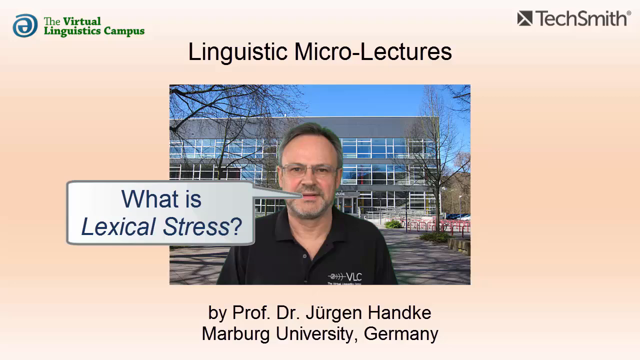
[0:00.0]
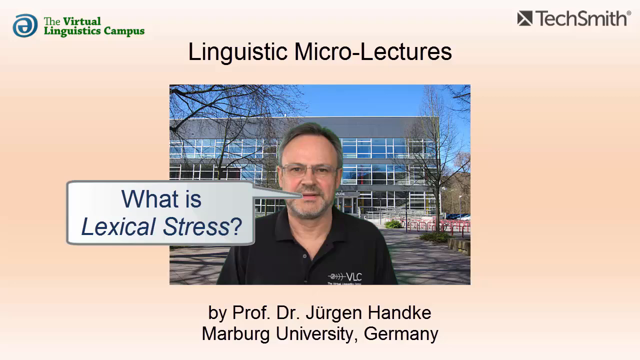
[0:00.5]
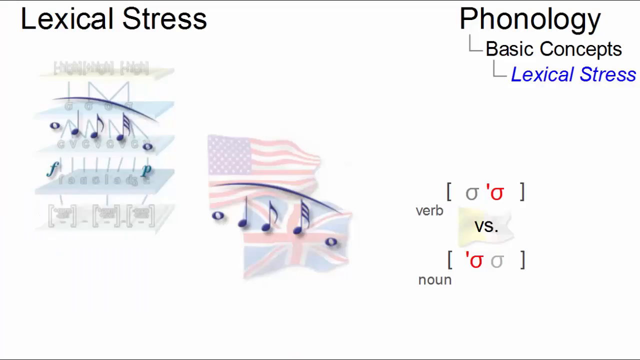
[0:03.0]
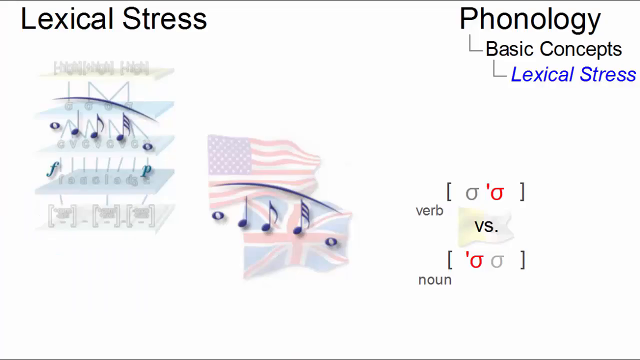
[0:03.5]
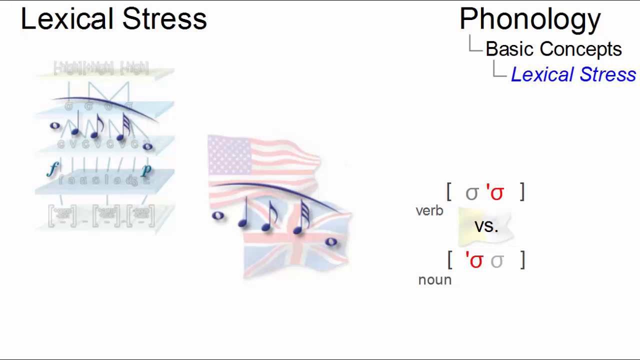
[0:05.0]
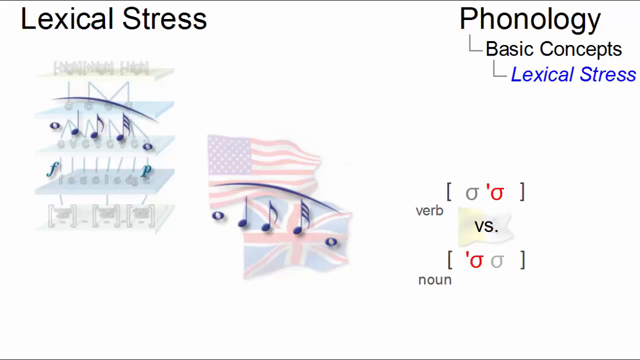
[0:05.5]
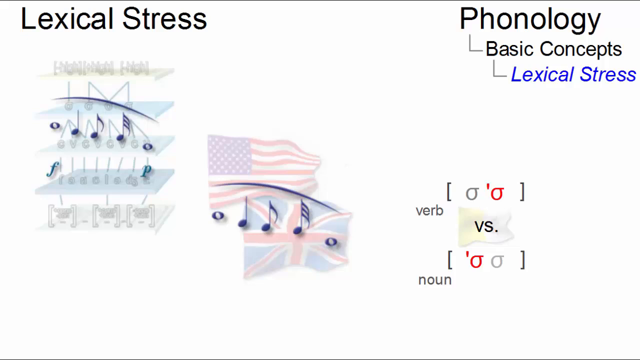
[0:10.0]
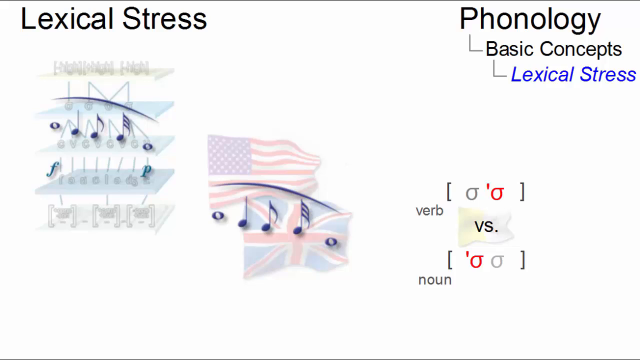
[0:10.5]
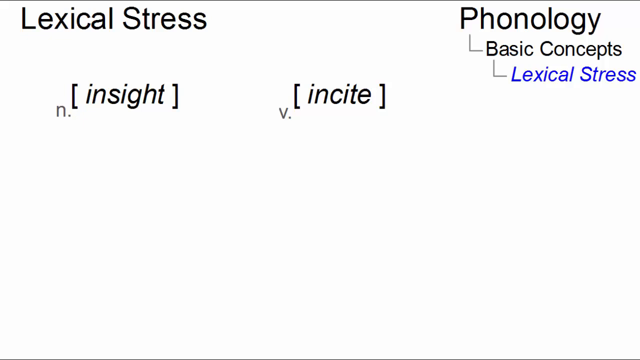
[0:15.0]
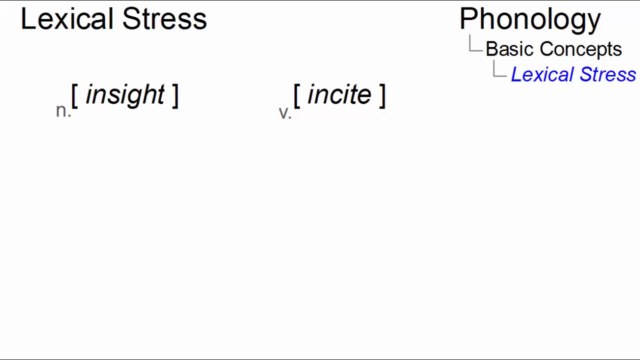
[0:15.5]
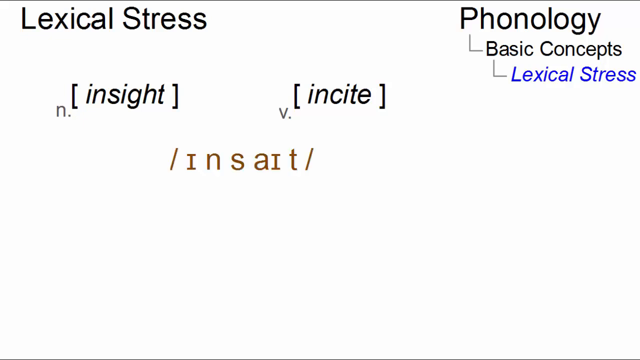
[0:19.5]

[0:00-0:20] The video is from the linguistic micro lectures. On the cover is a white man in front of a building that looks like a school or university building, seemingly some sort of institution. A speech bubble coming from his mouth says "what is lexical stress?" Some sort of musical notes appear, and the words "phonology, basic concepts, lexical stress" build onto the screen. Some sort of characters are written in red and blue; one says "red" and the other says "none." This appears to be a screen recording of a live stream. The American flag and UK flags are shown. Under "lexical stress" are the noun "inside" and the verb "inside," showing the difference between the two.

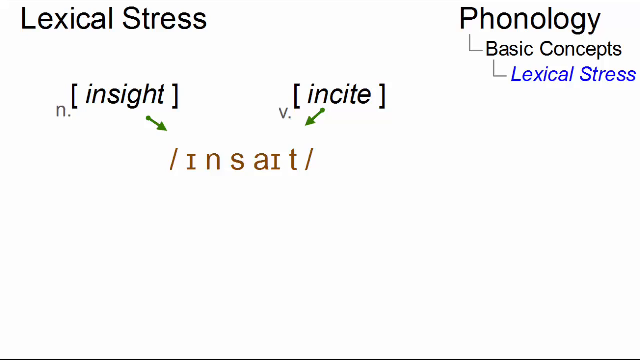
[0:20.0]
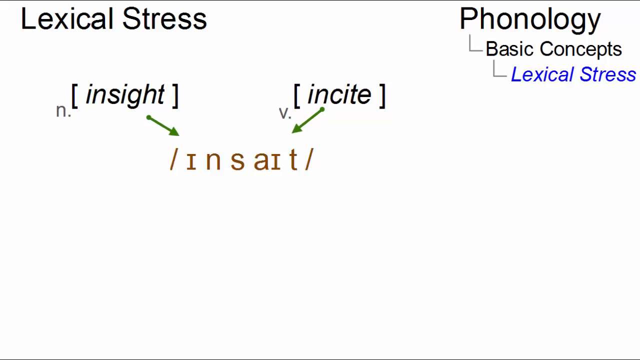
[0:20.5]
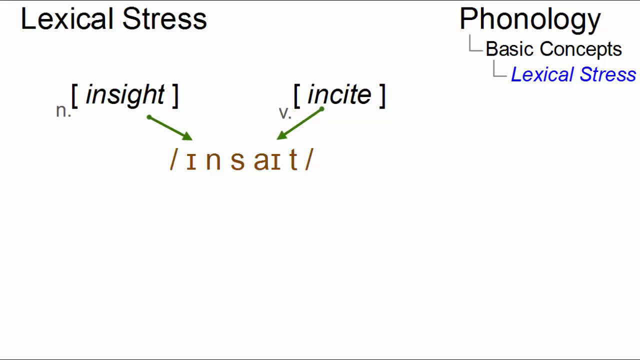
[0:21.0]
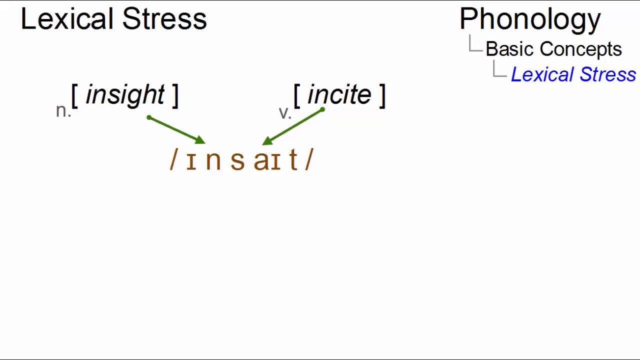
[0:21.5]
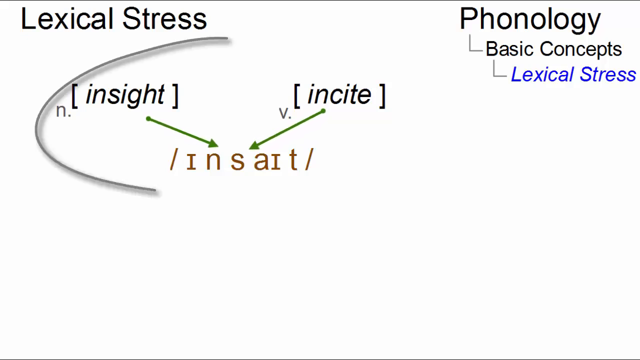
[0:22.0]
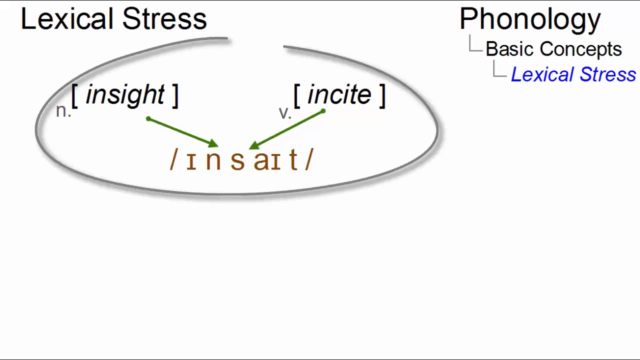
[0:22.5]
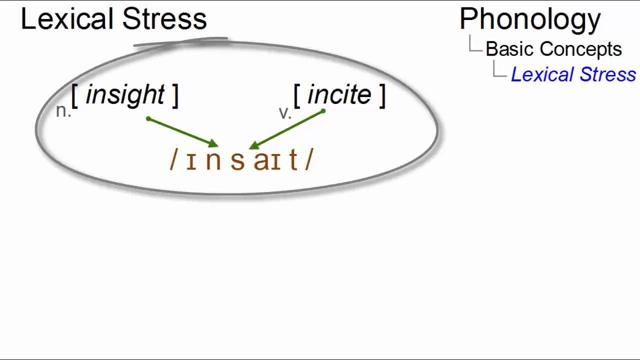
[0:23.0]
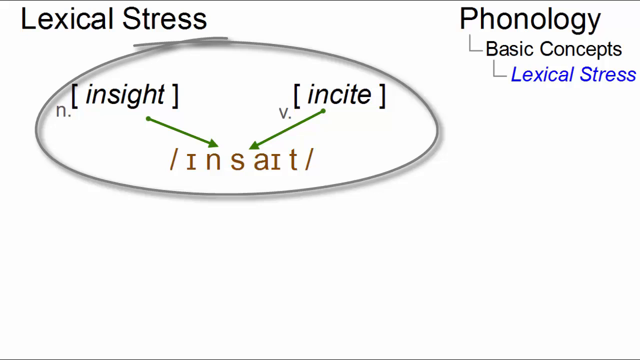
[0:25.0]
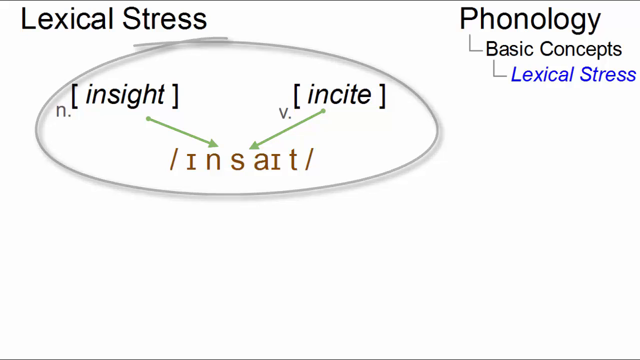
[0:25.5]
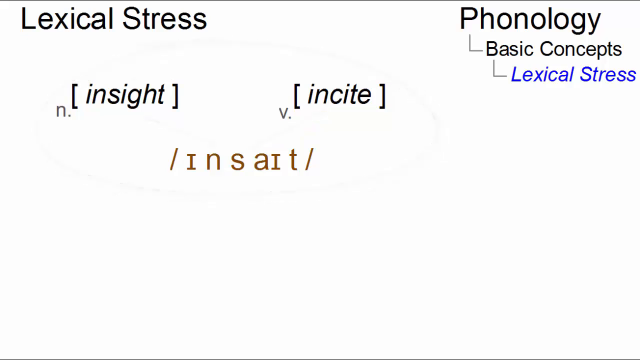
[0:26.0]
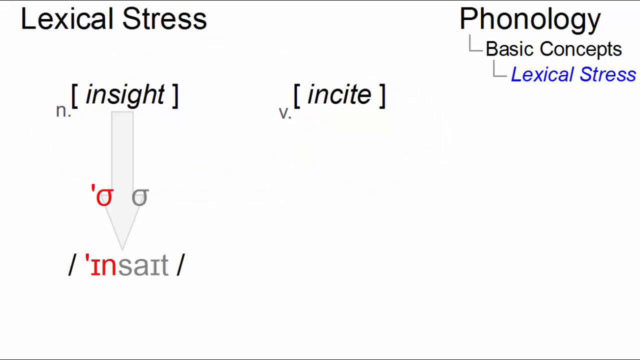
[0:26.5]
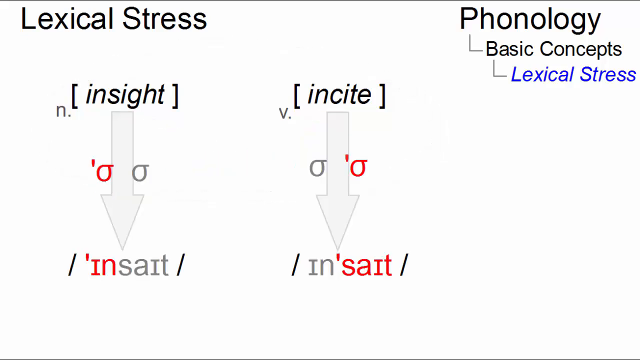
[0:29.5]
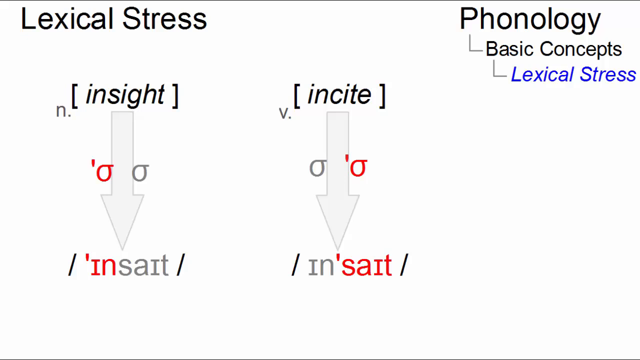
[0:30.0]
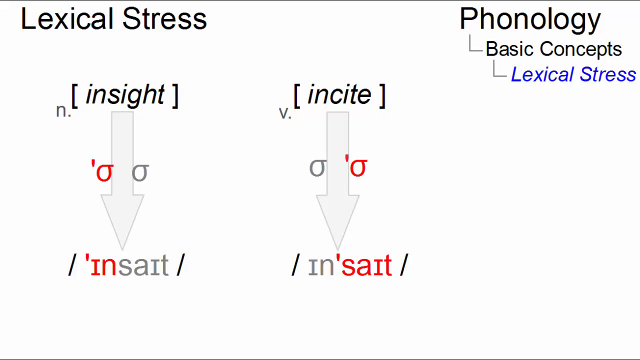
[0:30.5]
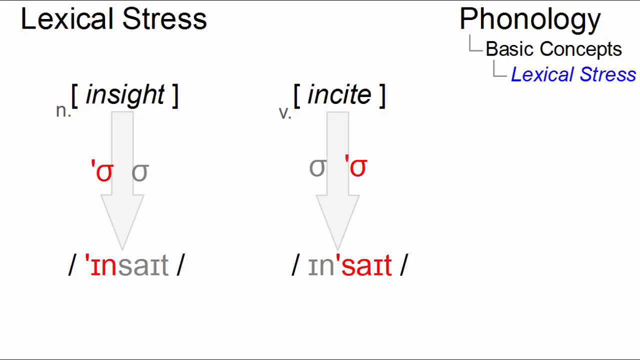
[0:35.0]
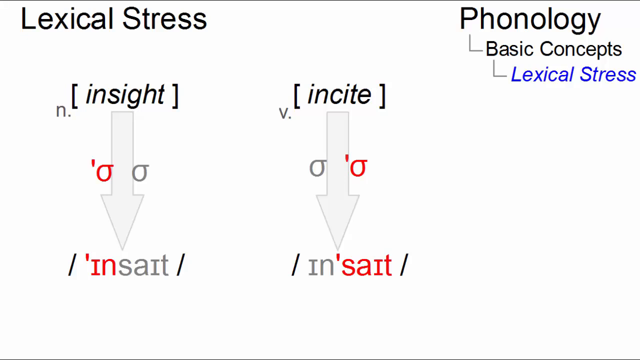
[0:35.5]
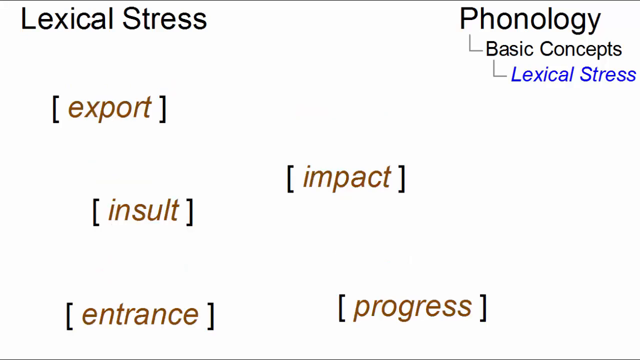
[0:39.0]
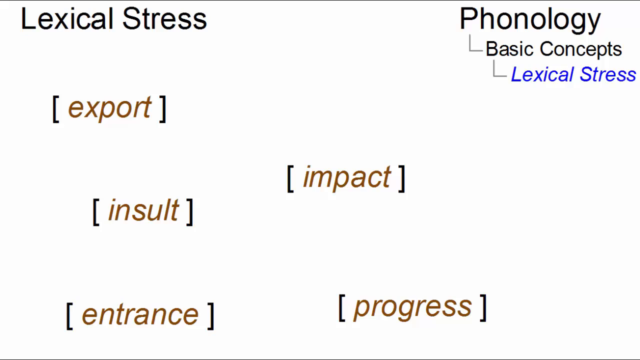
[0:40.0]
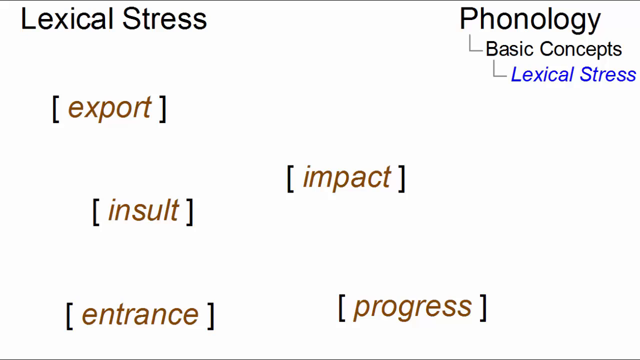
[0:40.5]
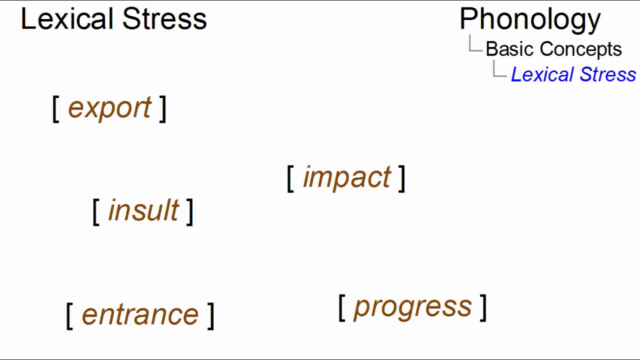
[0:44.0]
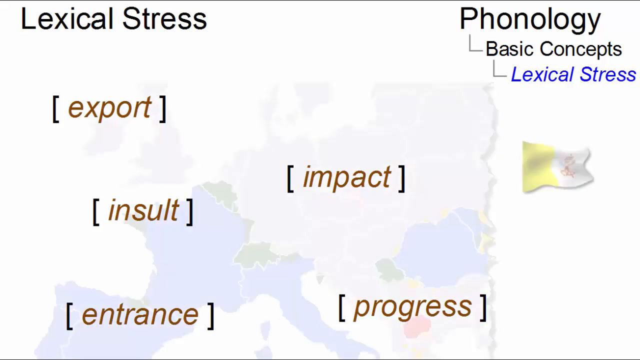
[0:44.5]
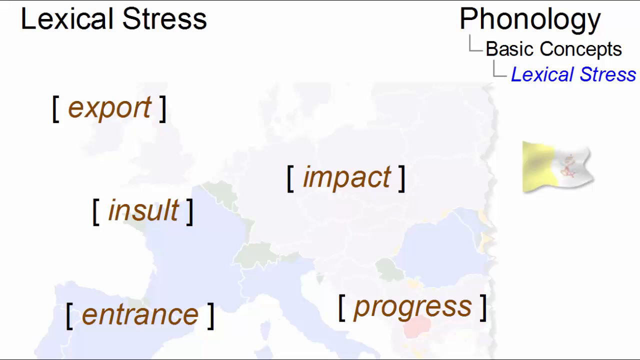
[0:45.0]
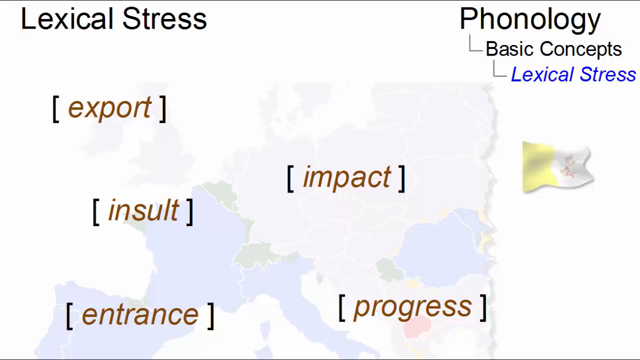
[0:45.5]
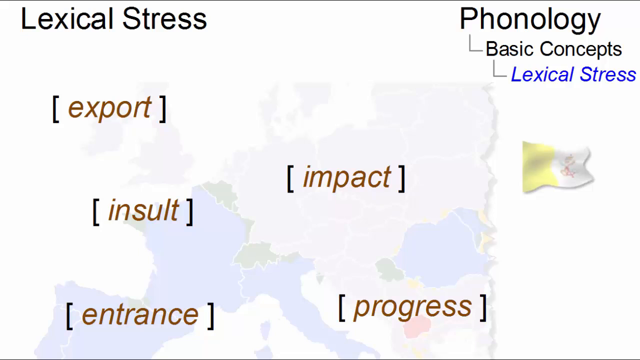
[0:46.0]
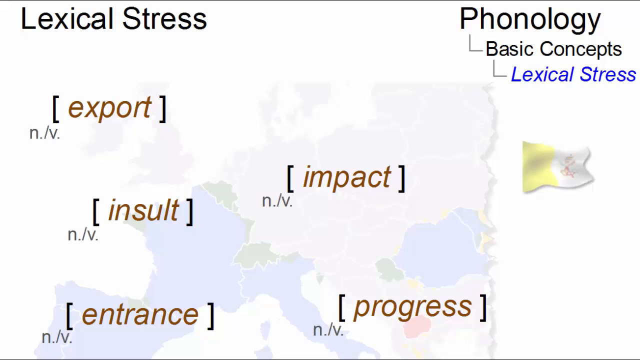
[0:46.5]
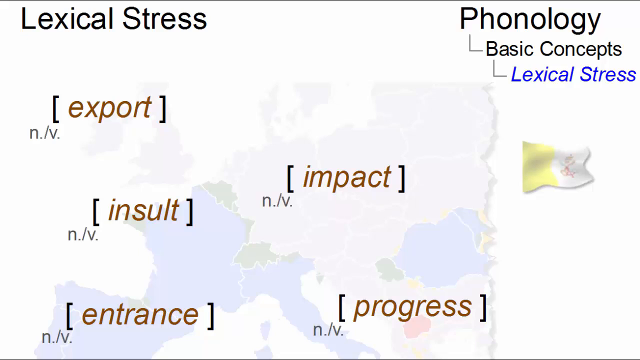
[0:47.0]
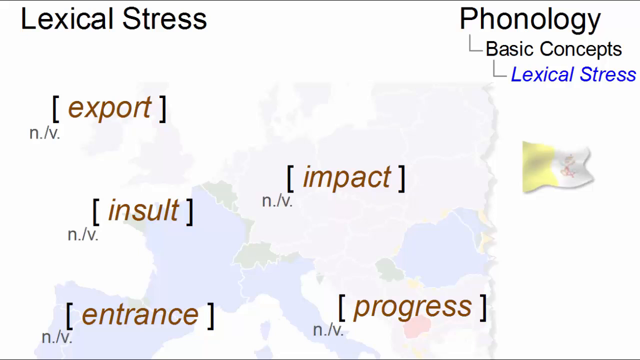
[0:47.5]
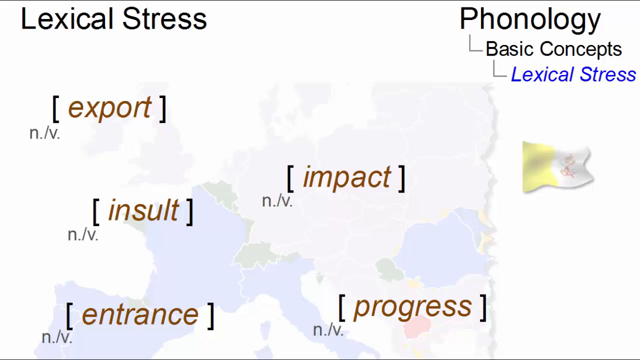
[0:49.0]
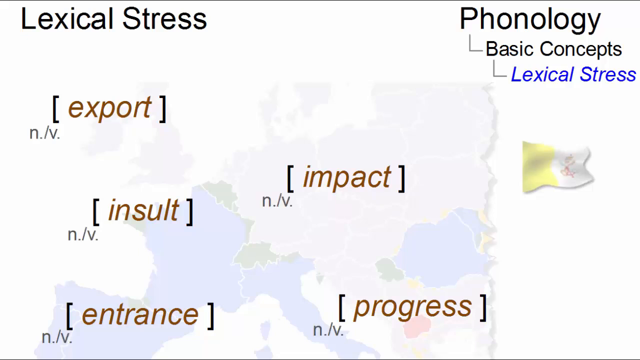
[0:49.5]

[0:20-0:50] The screen is still on lexical stress. "Lexical stress" is written in the top left corner, and "phonology, basic concept, lexical stress" is written at the top right. The noun version of "inside" and the verb version of "inside" are shown: one is a noun and the other is a verb, each with its phonological form shown. Words in square brackets then appear all over the screen: export, insult, entrance, progress and impact, with "noun" or "verb" written under each word. The screen changes color, showing different places around the world, possibly to show how different countries pronounce the words.